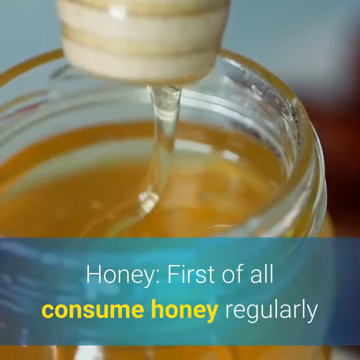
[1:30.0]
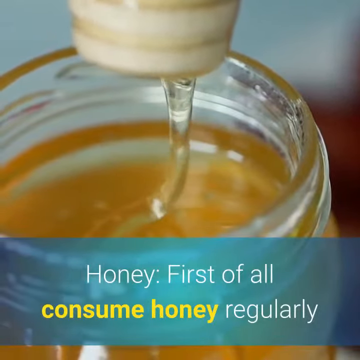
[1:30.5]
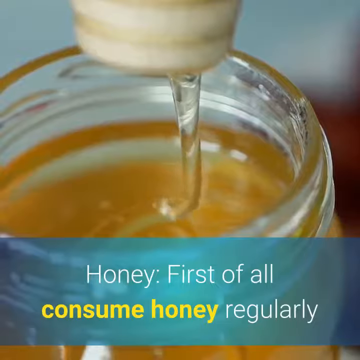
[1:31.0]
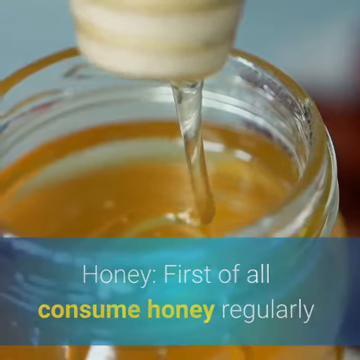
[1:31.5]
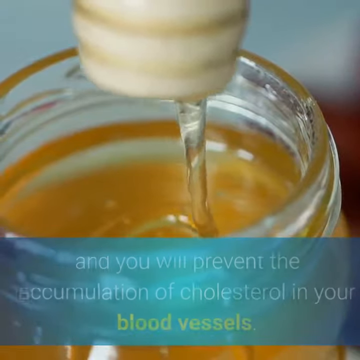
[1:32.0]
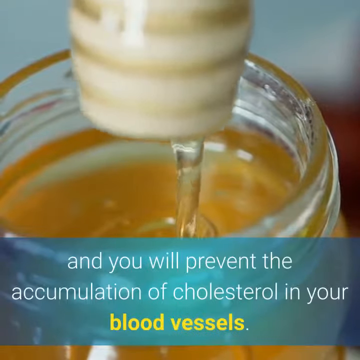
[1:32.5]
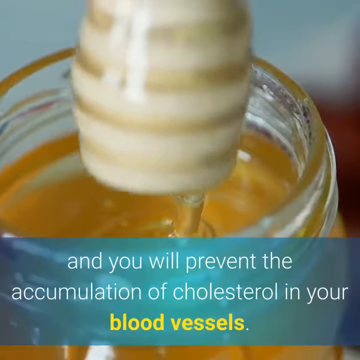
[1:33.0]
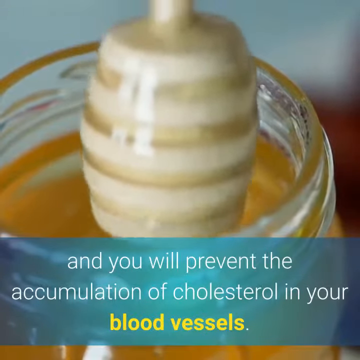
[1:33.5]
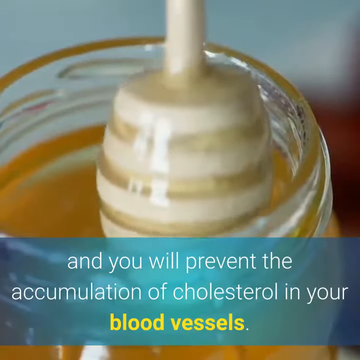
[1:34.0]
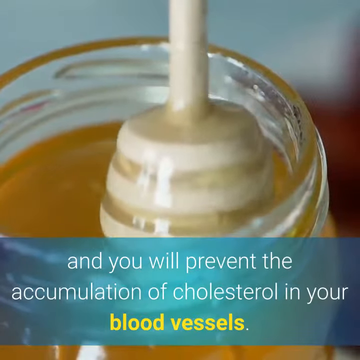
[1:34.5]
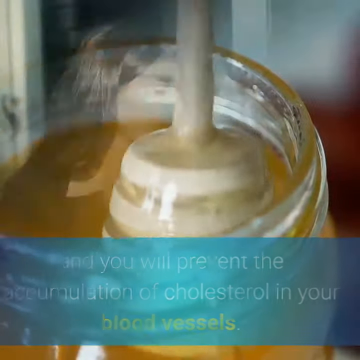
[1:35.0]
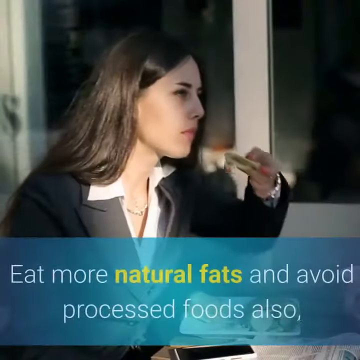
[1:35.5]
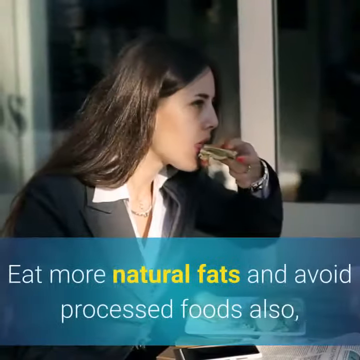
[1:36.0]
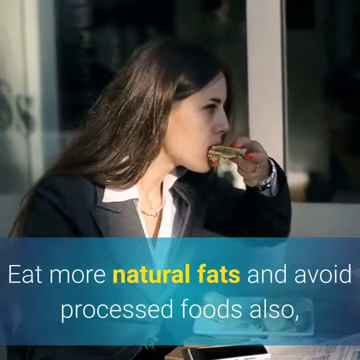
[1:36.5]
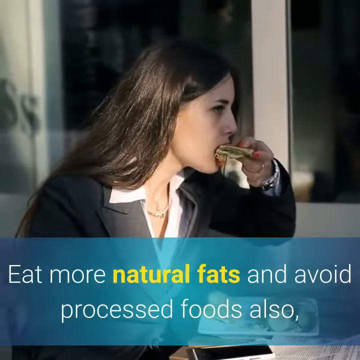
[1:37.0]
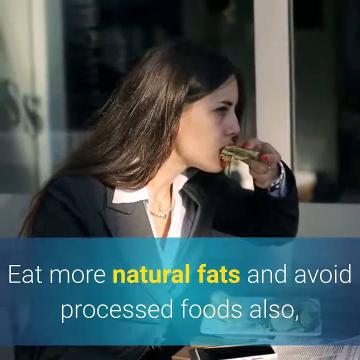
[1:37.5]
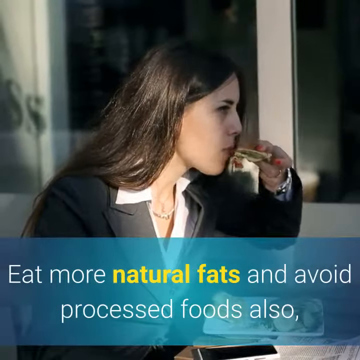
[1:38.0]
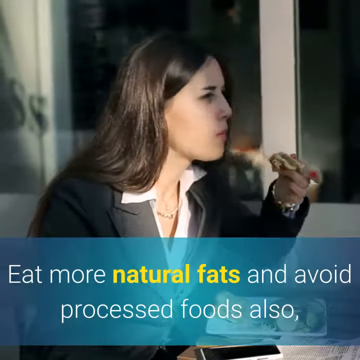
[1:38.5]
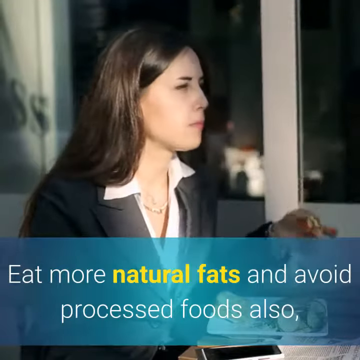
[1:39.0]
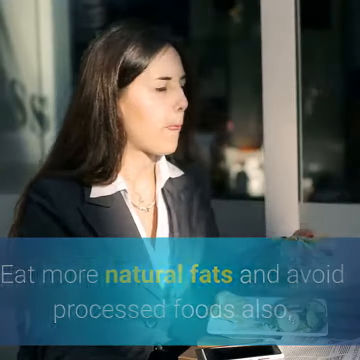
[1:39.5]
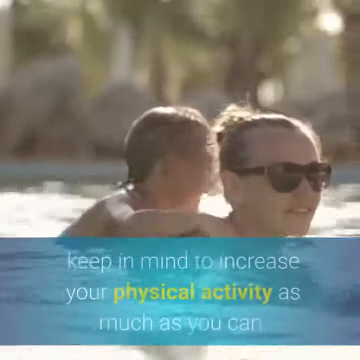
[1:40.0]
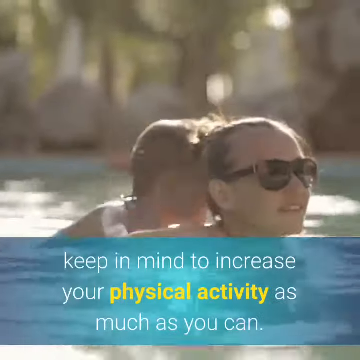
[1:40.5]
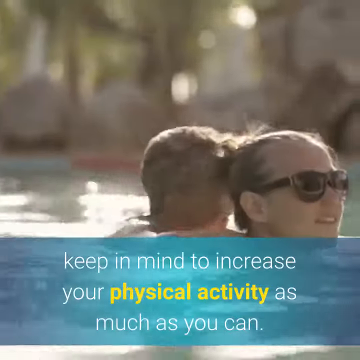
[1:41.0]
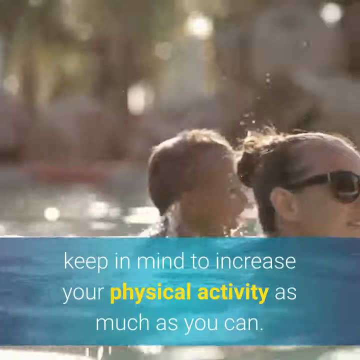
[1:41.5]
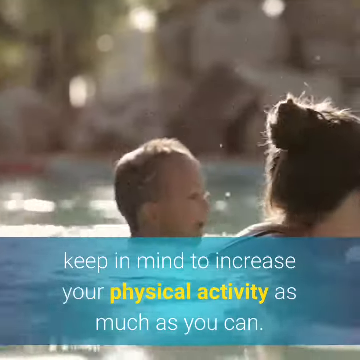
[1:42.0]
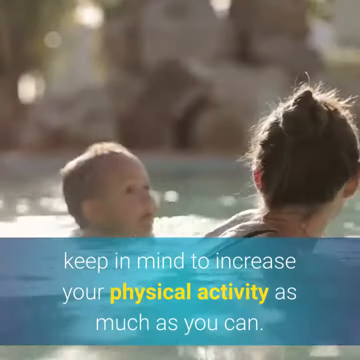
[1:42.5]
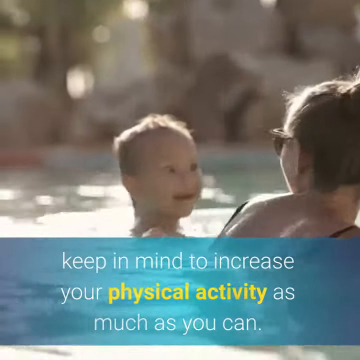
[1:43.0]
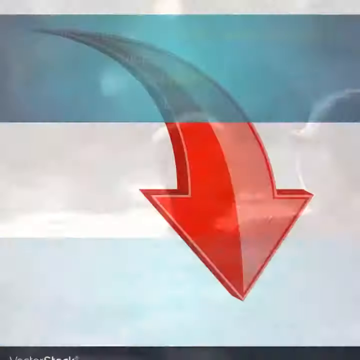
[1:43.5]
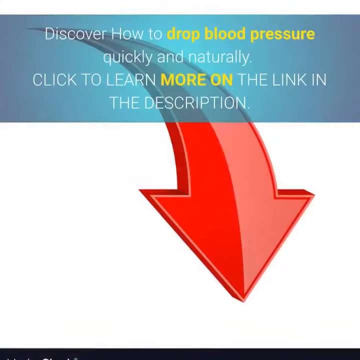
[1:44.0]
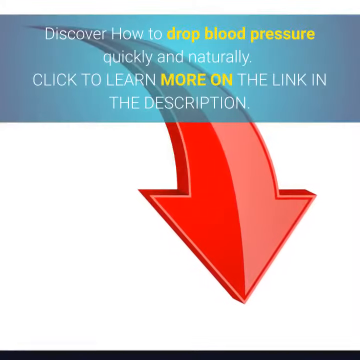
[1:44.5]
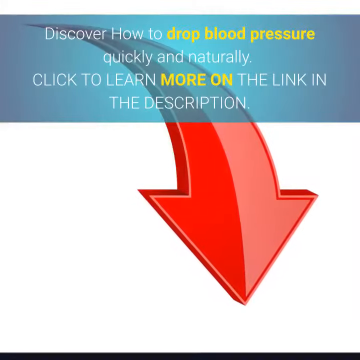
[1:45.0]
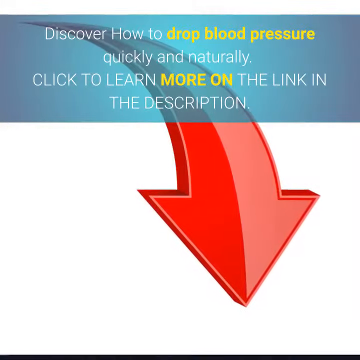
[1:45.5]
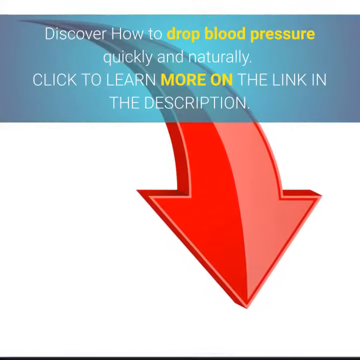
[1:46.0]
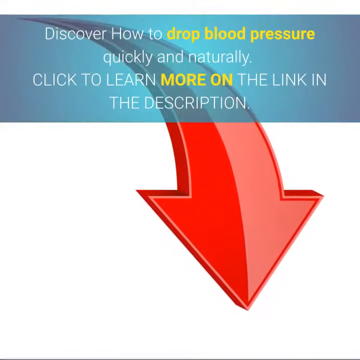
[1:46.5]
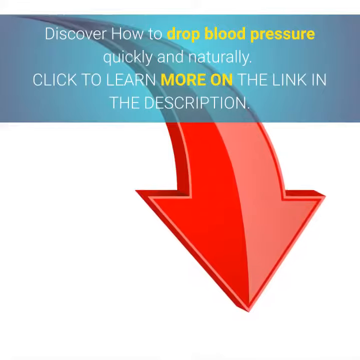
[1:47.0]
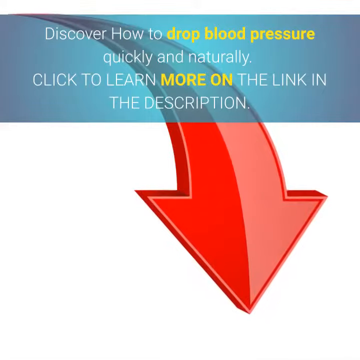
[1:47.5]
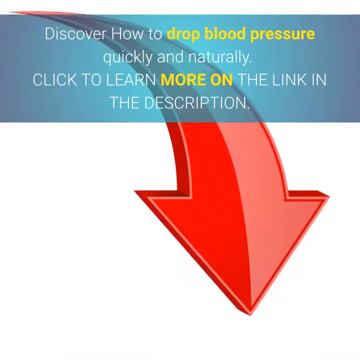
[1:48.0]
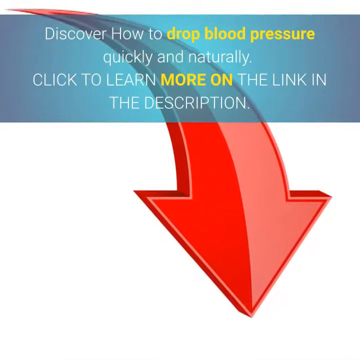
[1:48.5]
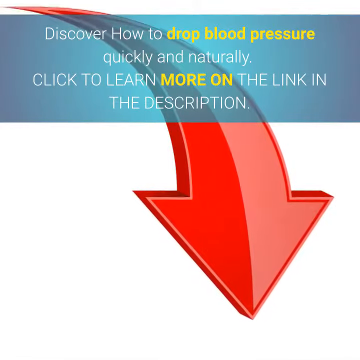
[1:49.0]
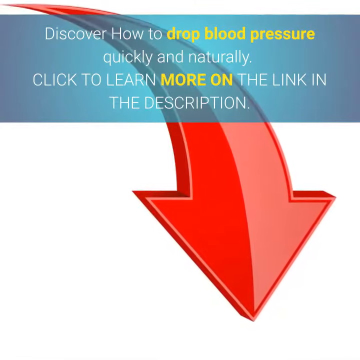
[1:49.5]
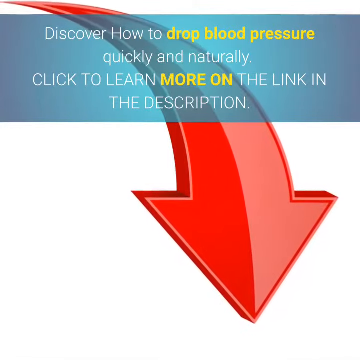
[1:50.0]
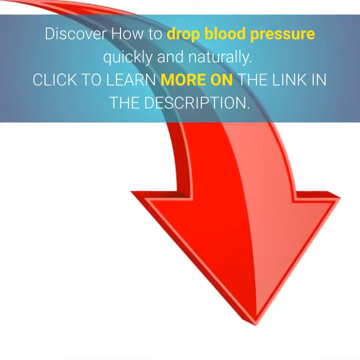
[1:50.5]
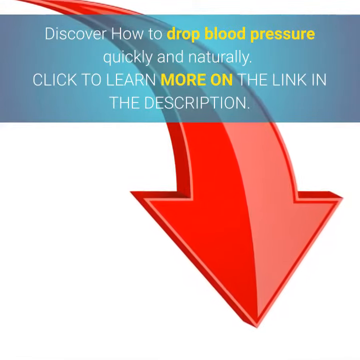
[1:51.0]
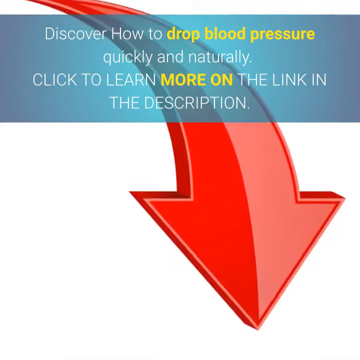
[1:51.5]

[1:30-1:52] A jar of honey appears with a blue banner in white and yellow text reading "honey. First of all consume honey regularly." Honey is squeezed out into a container, and more text reads "and you will prevent the accumulation of cholesterol in your blood vessels." What looks like a honeycomb or something goes into the jar of honey. Then a person eats something, with a blue banner in white and yellow text reading "eat more natural fats and avoid processed foods. Also keep in mind to increase your physical activity as much as you can." A woman and a child swim in water. Finally, a white background shows a red arrow pointing down, with a blue banner at the top in white and yellow text reading "discover how to drop blood pressure quickly and naturally. Click to learn more on the link in the description," as the camera slowly zooms in somewhat.